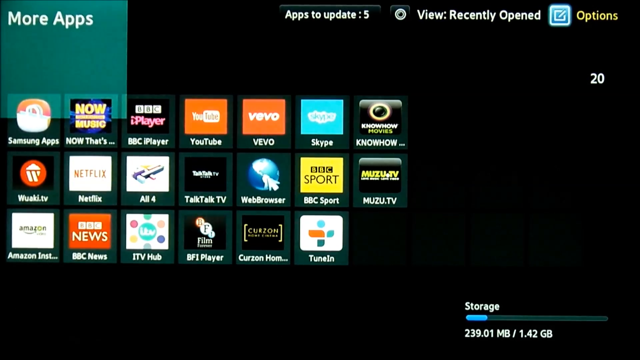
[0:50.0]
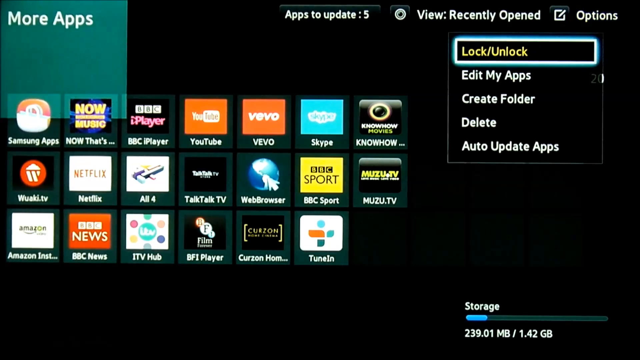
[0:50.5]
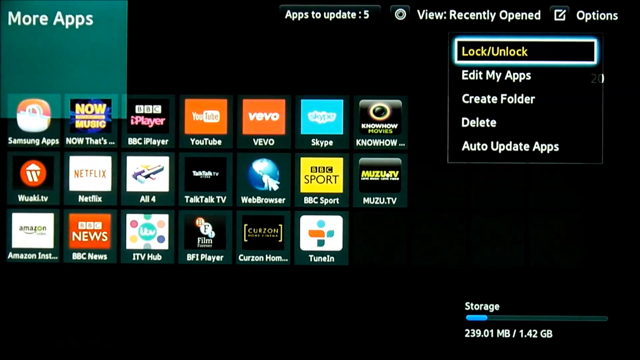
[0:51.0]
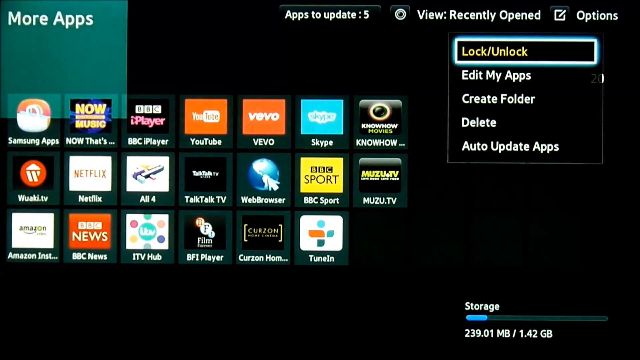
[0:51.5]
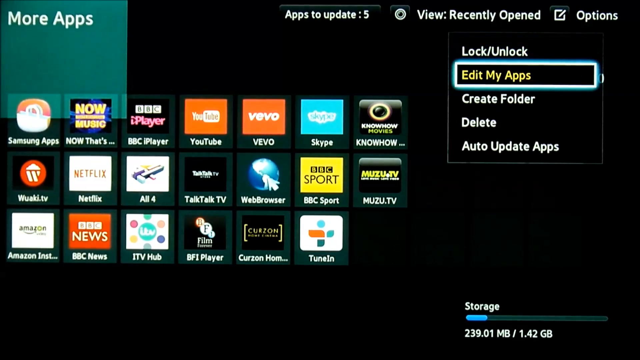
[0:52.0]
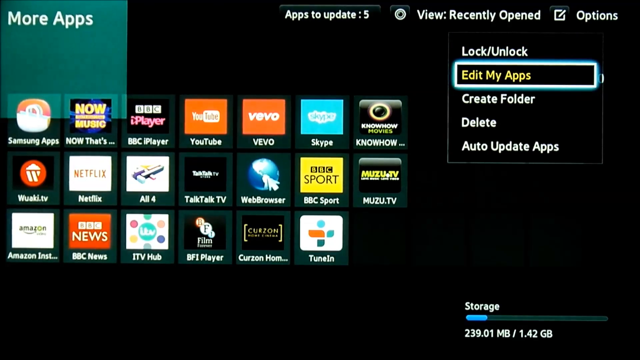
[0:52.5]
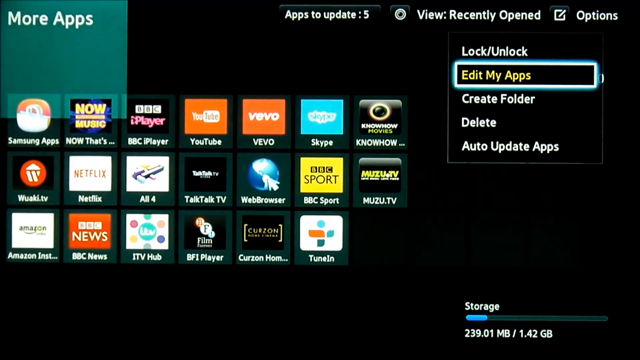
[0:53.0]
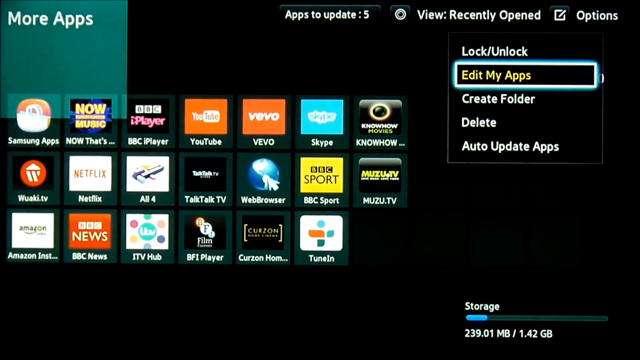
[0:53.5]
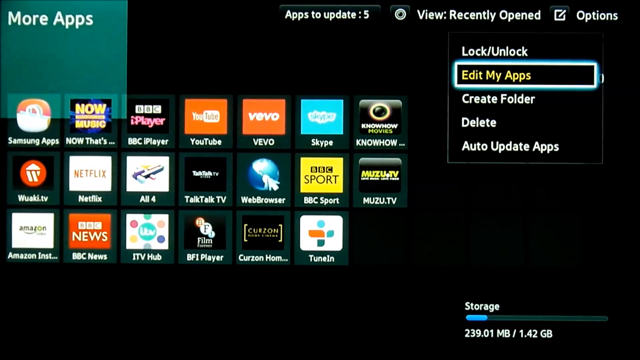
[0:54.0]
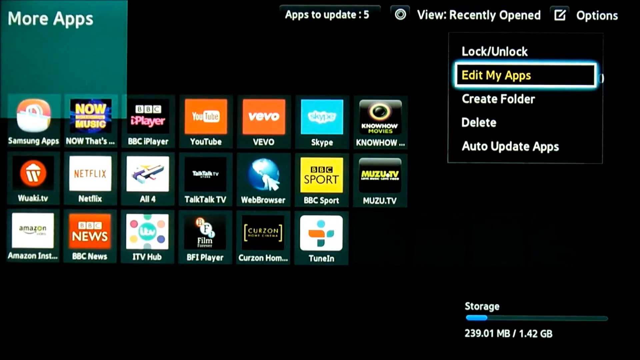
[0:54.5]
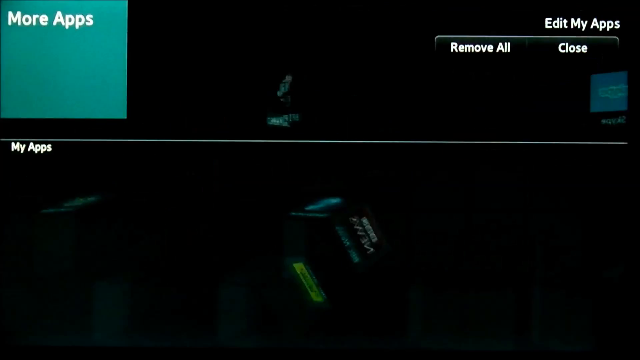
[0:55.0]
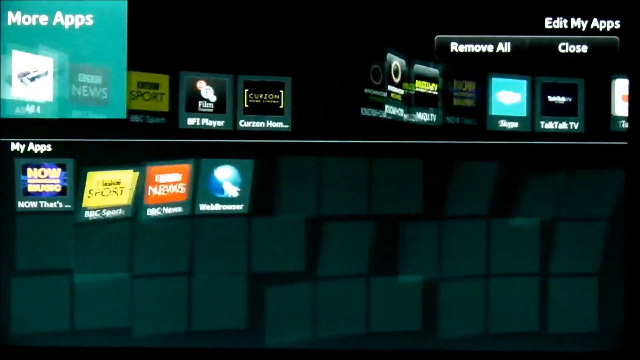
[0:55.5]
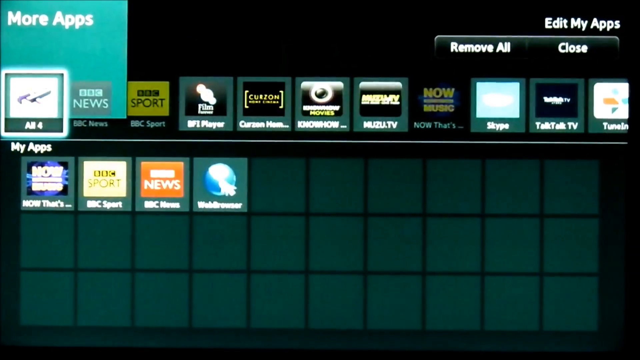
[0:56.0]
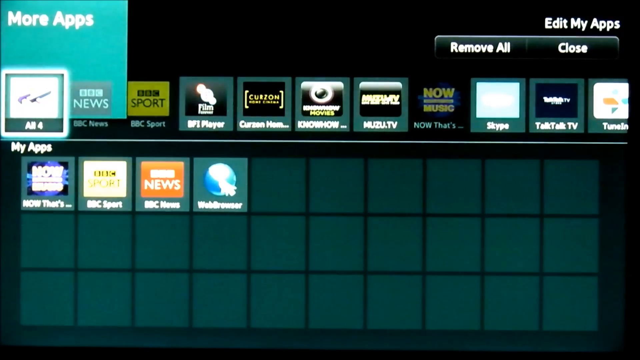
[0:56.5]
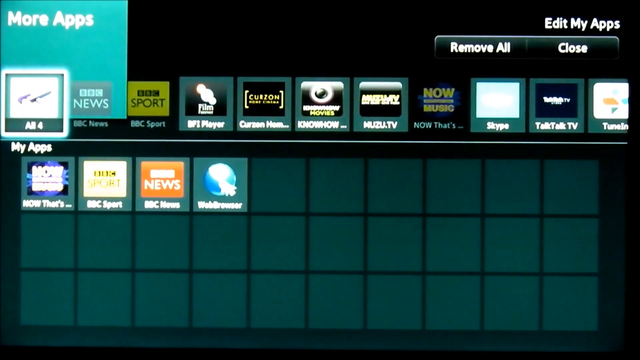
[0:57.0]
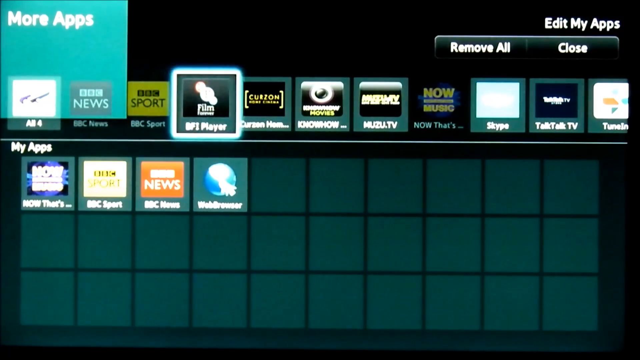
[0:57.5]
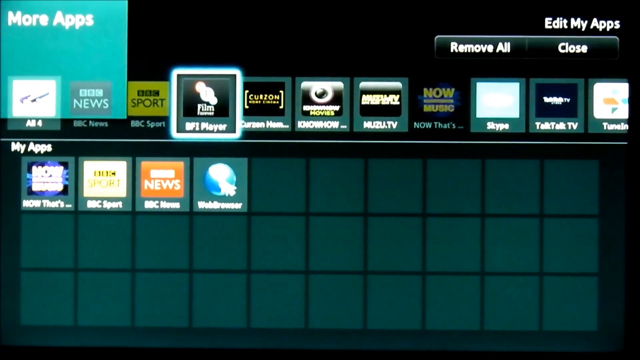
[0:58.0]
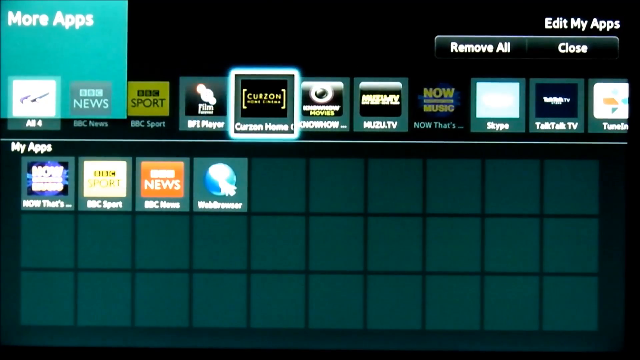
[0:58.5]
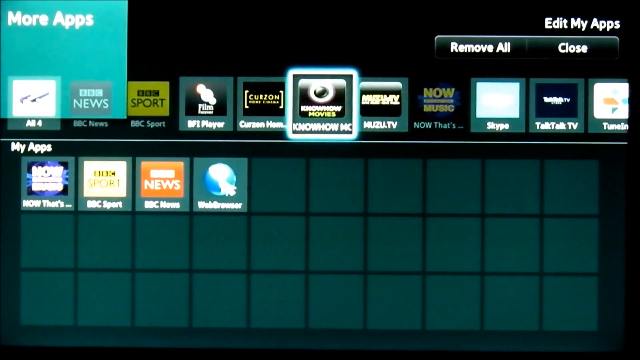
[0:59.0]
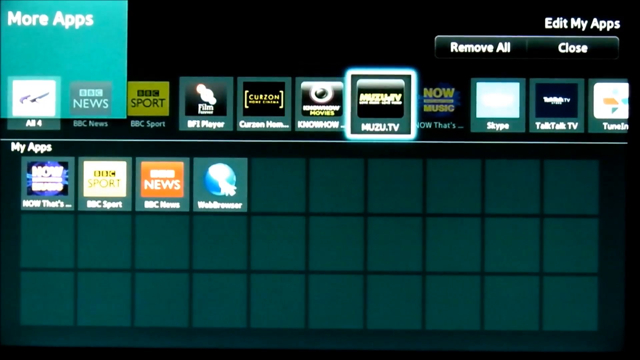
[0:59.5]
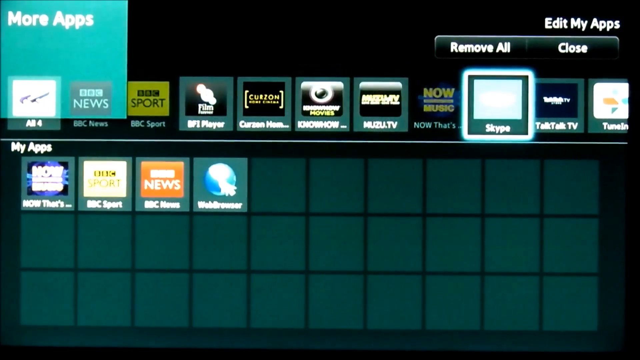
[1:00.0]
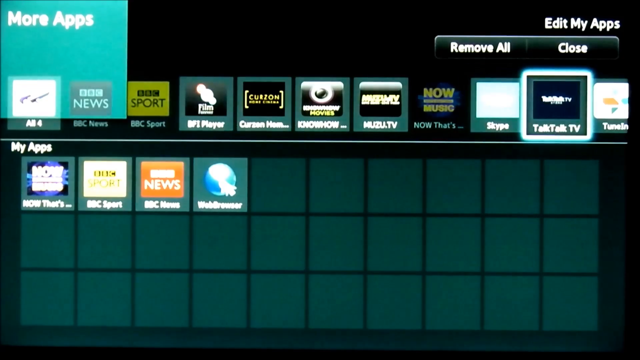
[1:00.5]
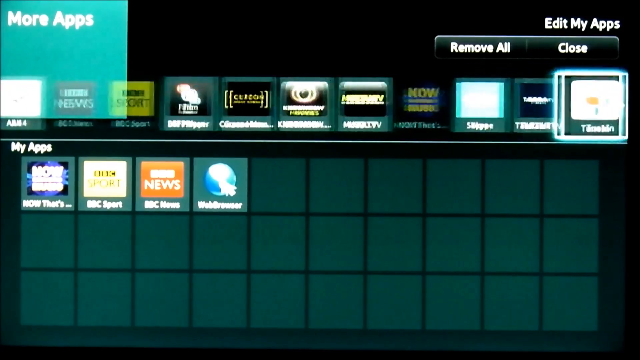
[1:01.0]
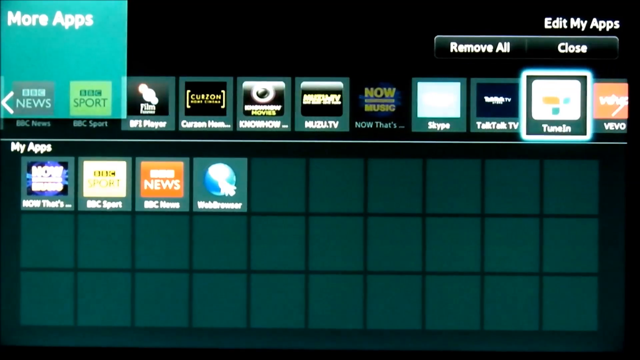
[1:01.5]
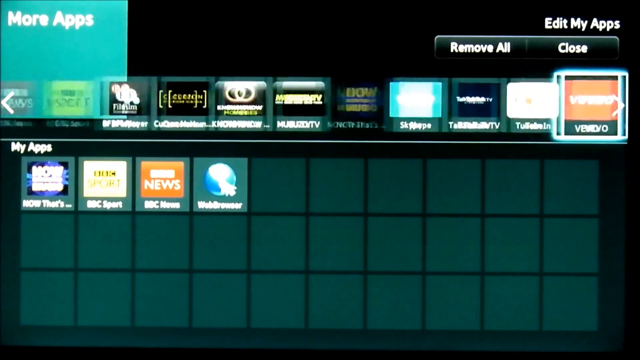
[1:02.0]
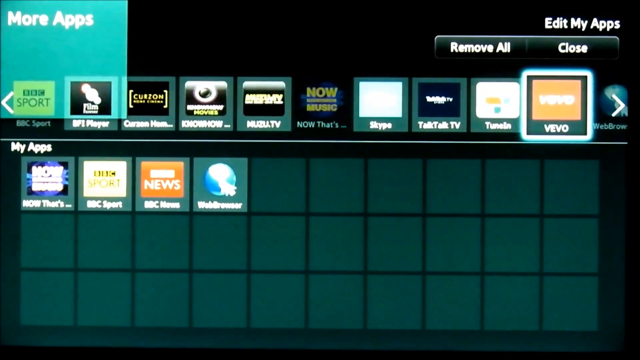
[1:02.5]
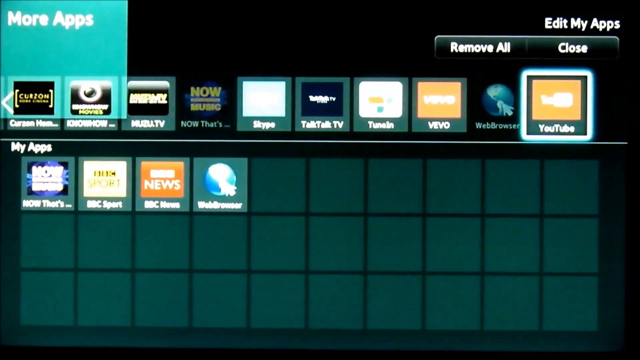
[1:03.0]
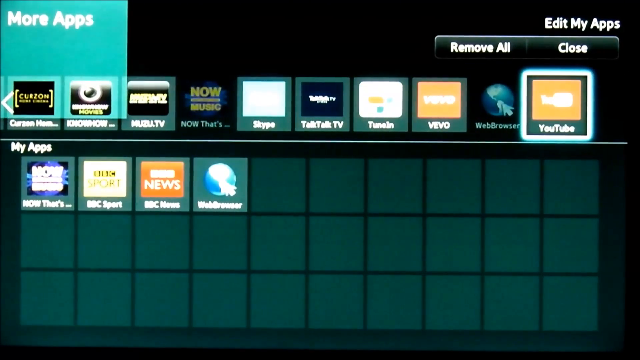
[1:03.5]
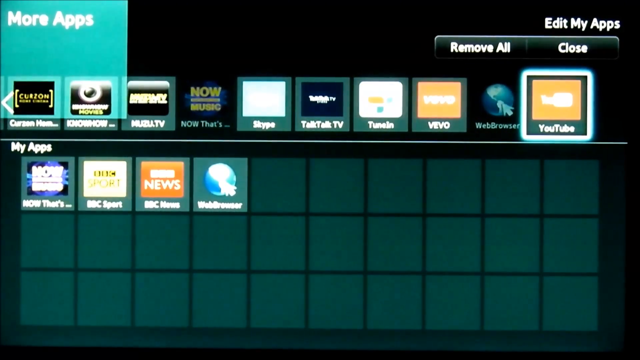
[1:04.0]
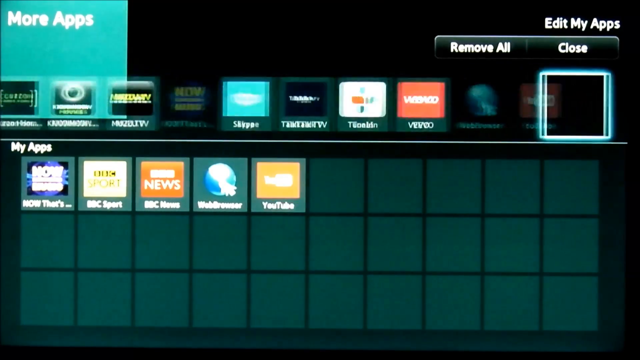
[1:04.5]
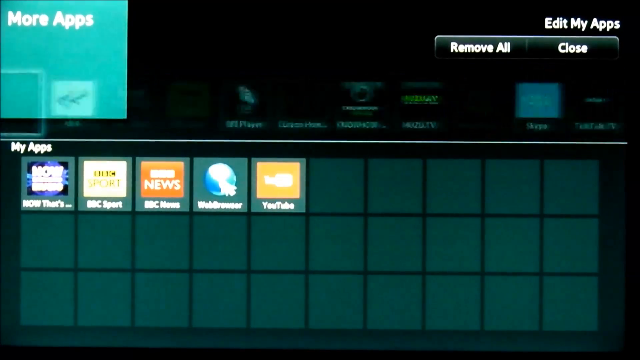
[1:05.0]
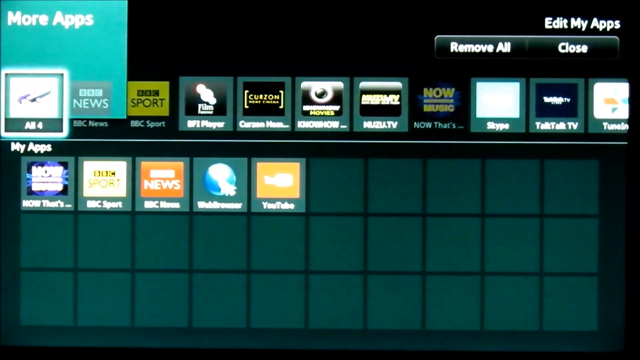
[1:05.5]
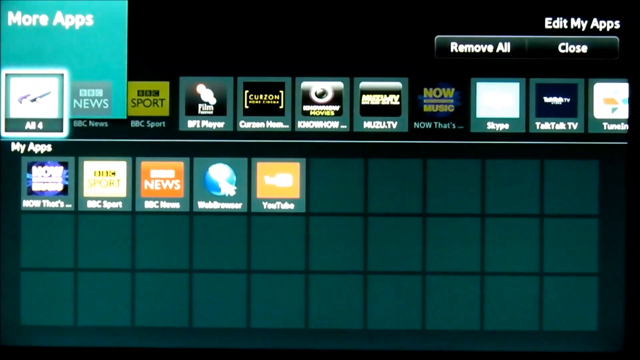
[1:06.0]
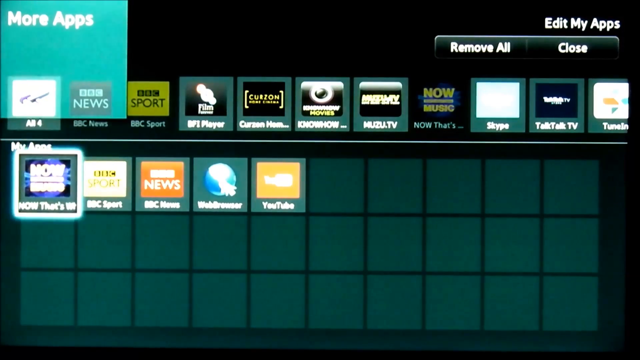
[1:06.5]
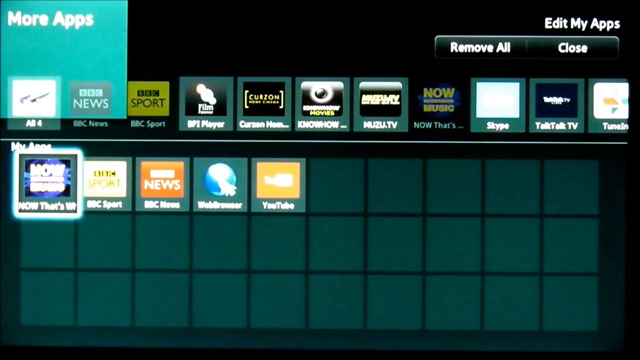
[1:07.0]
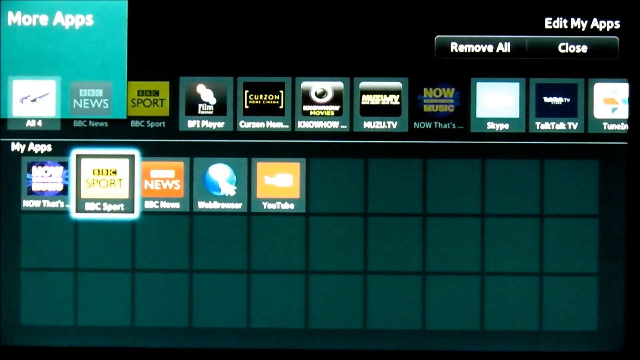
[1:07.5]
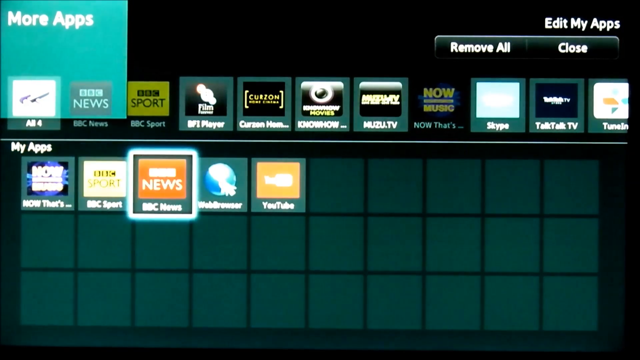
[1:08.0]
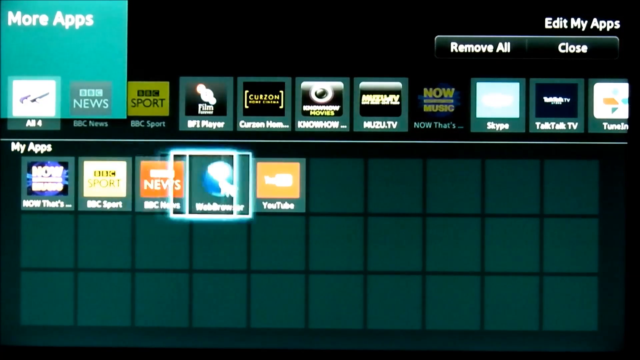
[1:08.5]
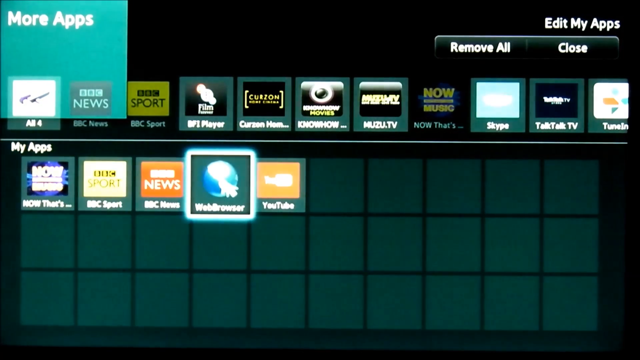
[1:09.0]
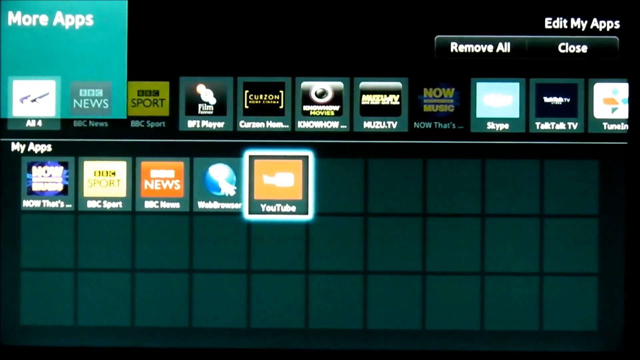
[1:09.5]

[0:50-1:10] The options menu is selected and brings up a small menu listing "lock/unlock", "edit my apps", "create folder", "delete" and "auto-update apps". The glowing box goes down to edit my apps, and the image quality seems to deteriorate further. The cursor moves across to the YouTube icon and clicks it, and it appears in My Apps at the bottom of the screen, which now holds five apps. This may be showing how to get the YouTube shortcut onto the apps menu. The glowing box goes around the YouTube icon. The camera image is blurry and poor in places, and the background is dark, with a kind of neon glowing box marking the icon about to be clicked.